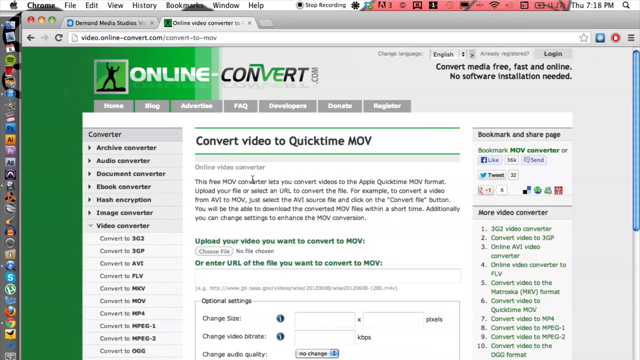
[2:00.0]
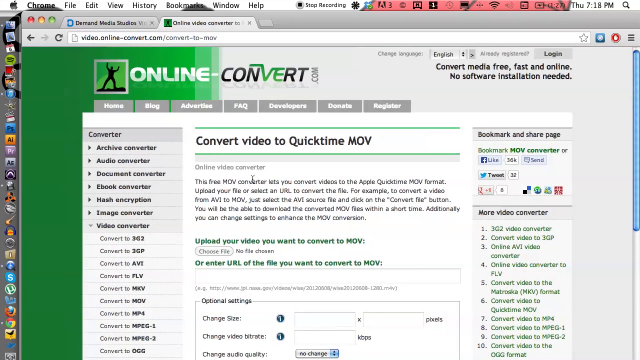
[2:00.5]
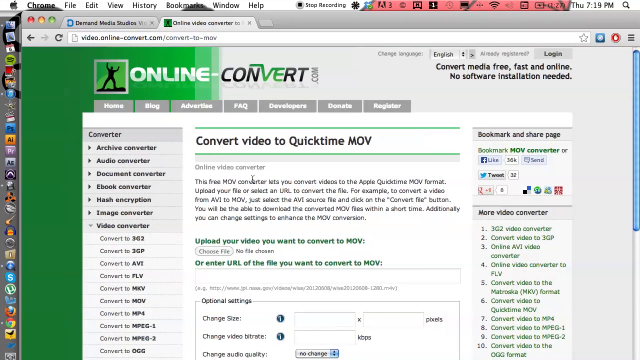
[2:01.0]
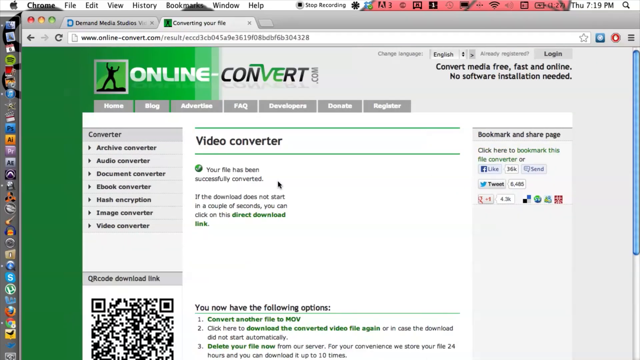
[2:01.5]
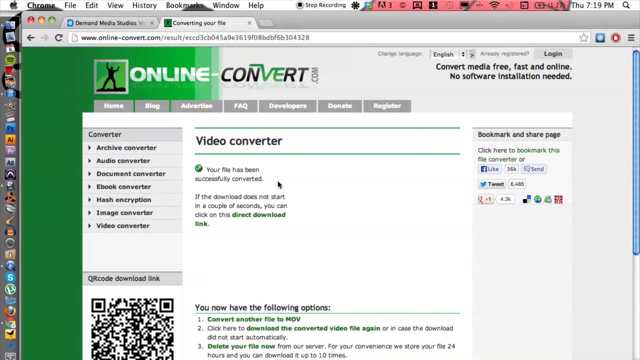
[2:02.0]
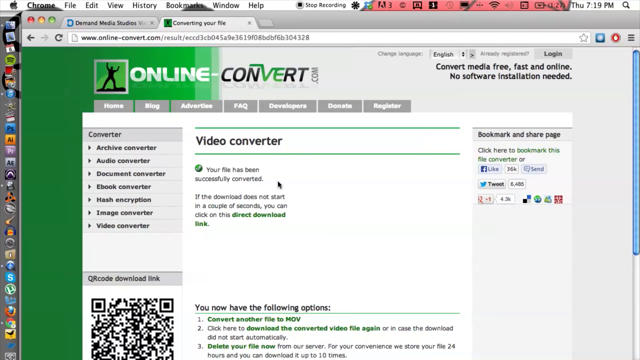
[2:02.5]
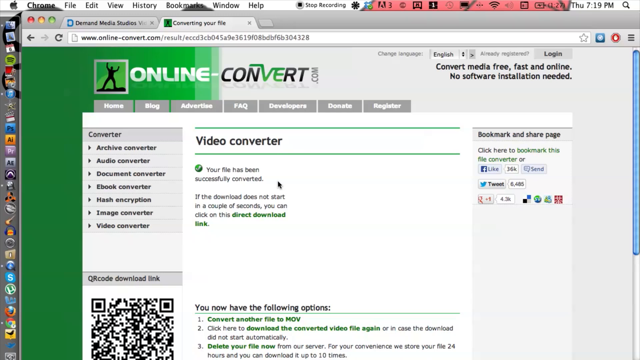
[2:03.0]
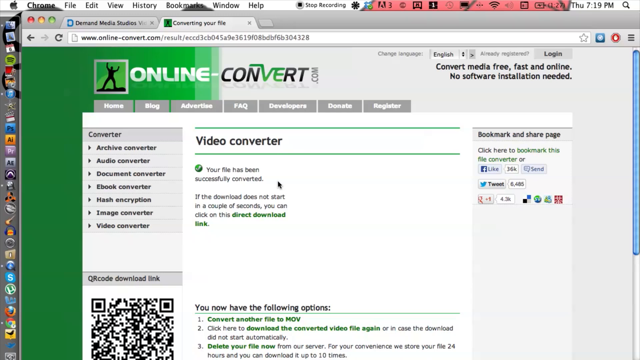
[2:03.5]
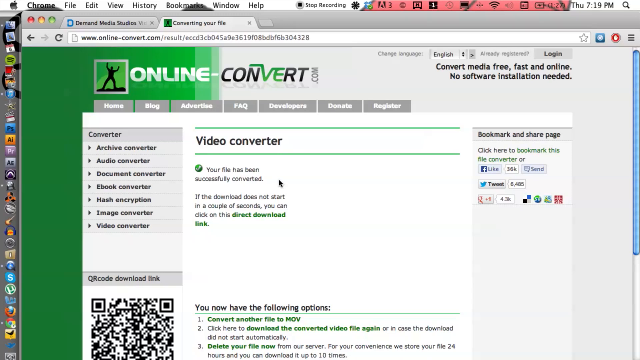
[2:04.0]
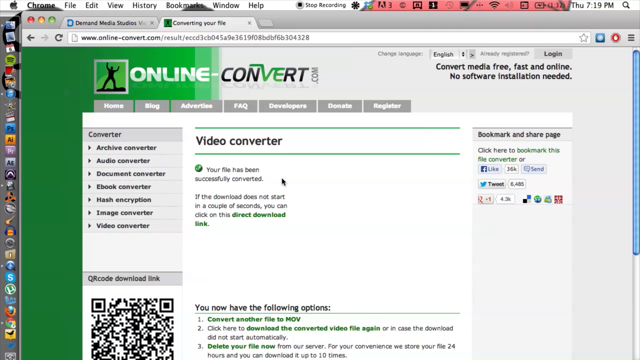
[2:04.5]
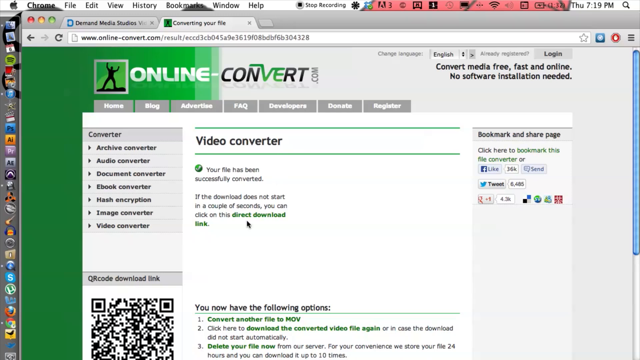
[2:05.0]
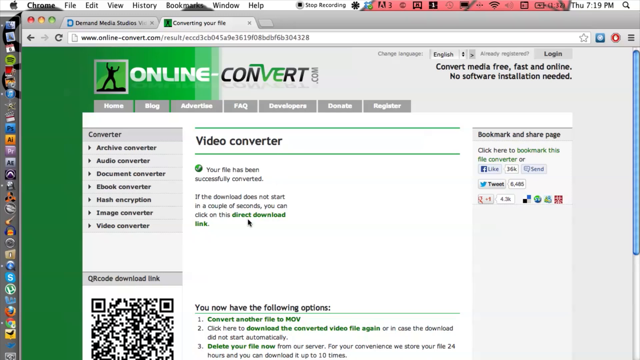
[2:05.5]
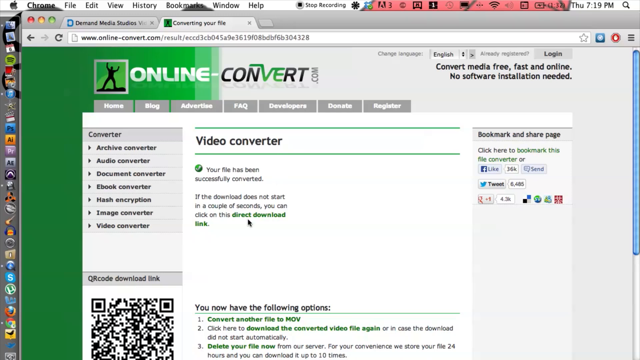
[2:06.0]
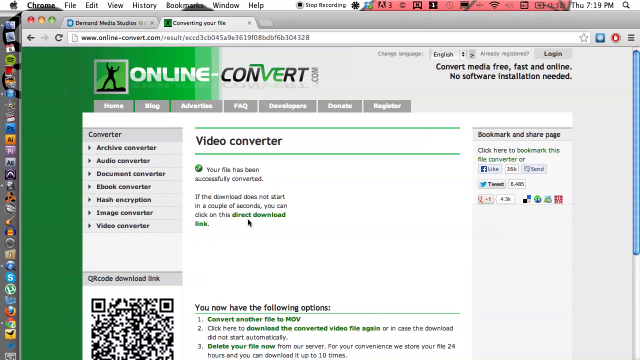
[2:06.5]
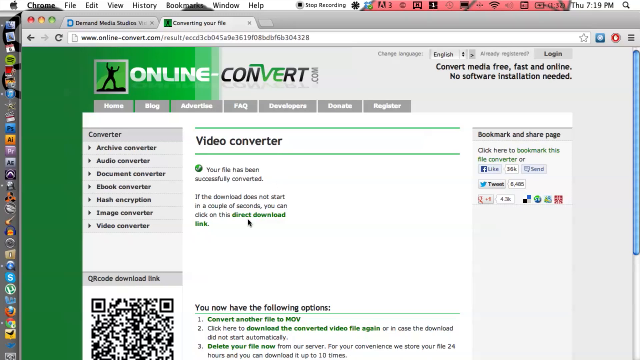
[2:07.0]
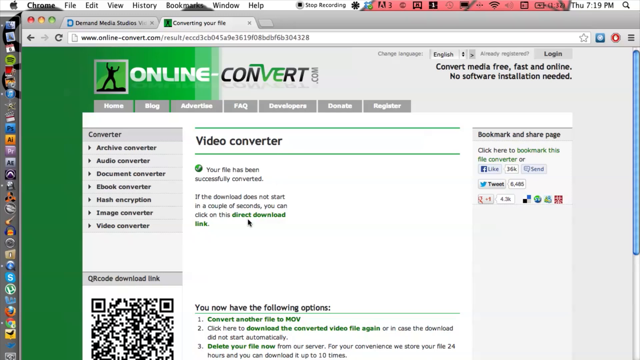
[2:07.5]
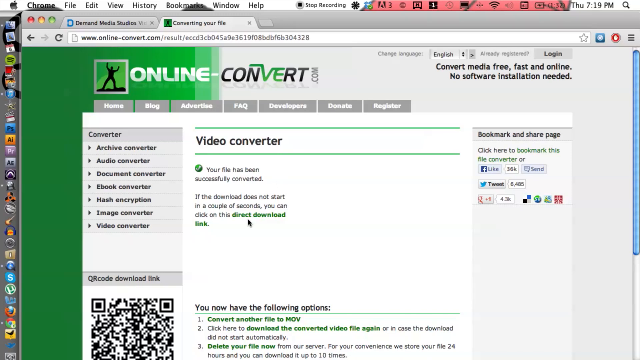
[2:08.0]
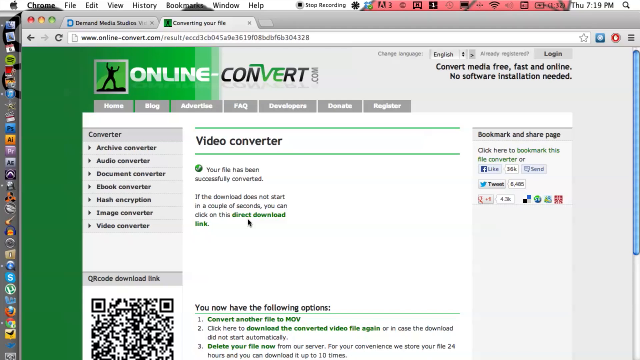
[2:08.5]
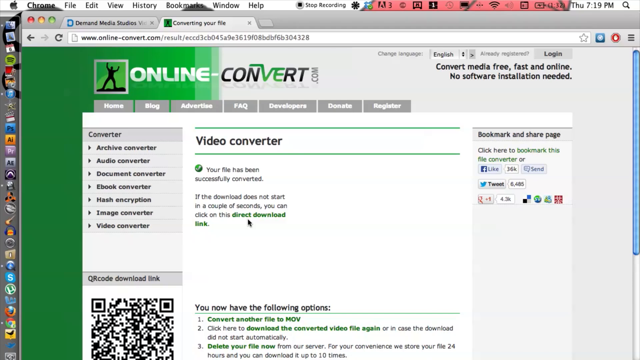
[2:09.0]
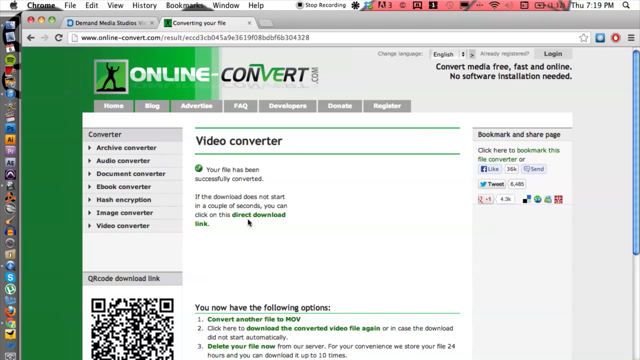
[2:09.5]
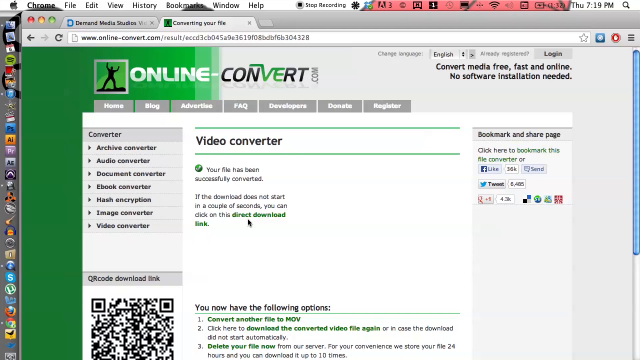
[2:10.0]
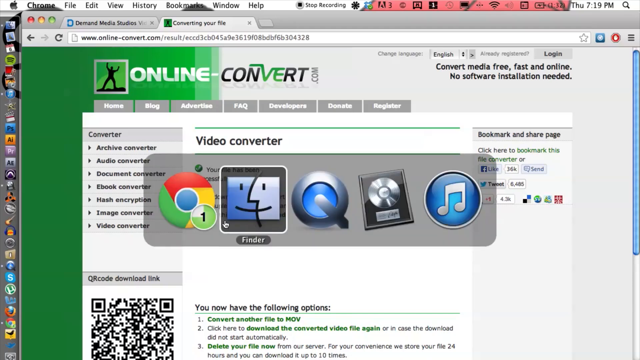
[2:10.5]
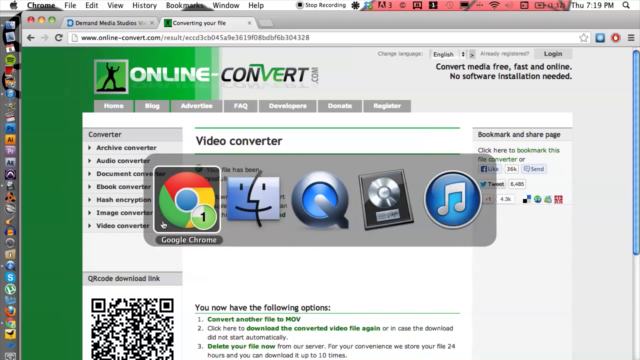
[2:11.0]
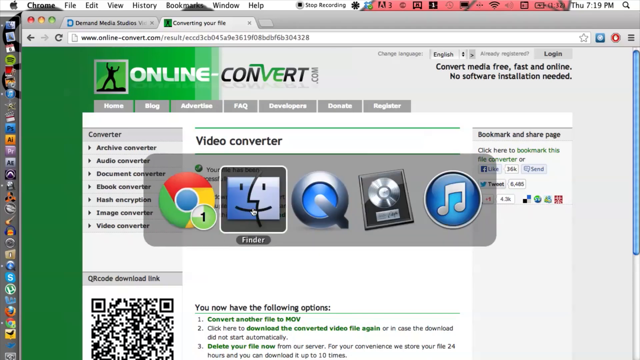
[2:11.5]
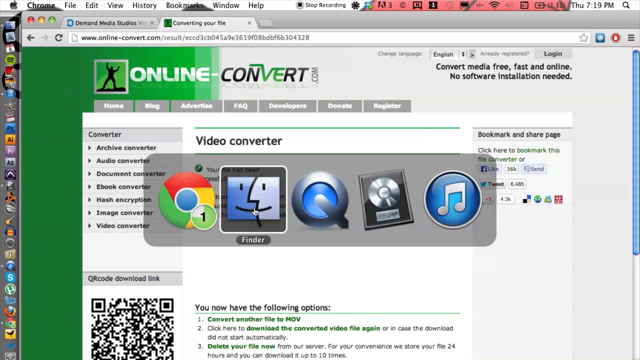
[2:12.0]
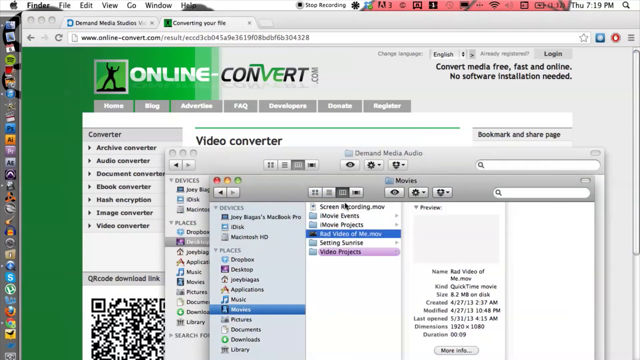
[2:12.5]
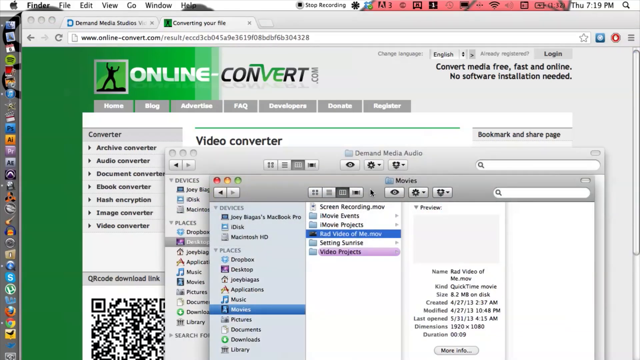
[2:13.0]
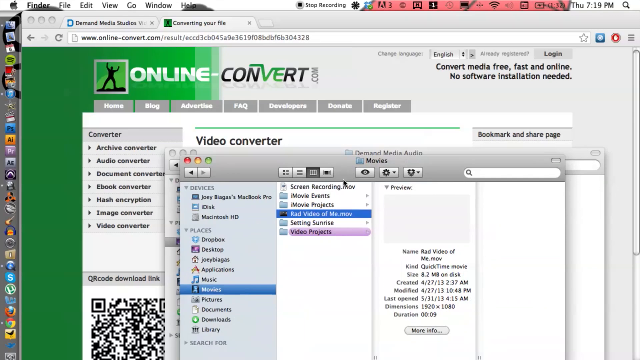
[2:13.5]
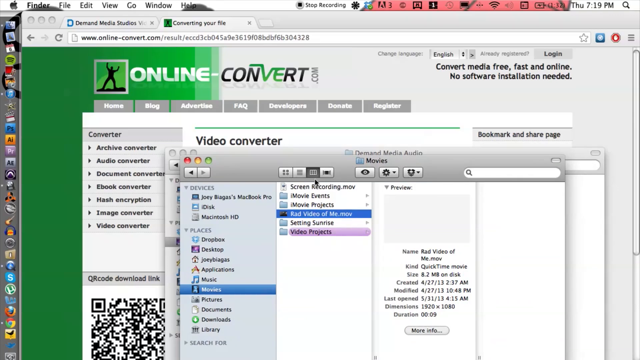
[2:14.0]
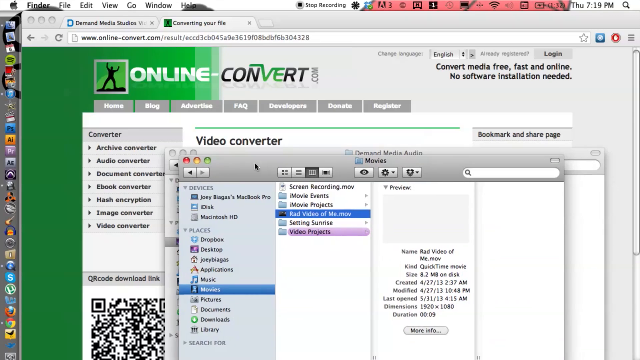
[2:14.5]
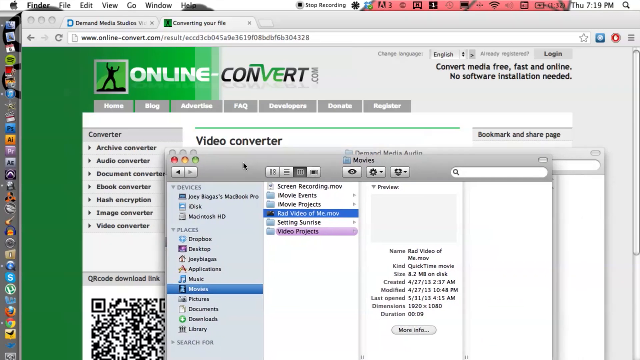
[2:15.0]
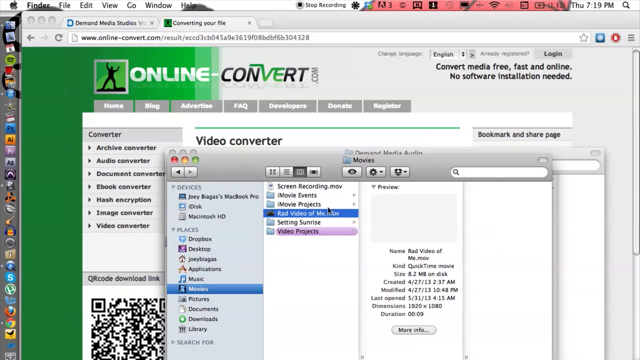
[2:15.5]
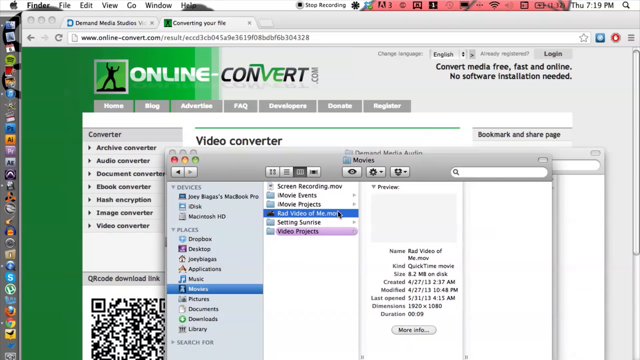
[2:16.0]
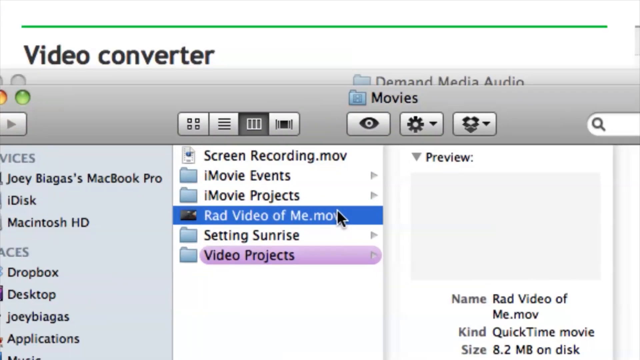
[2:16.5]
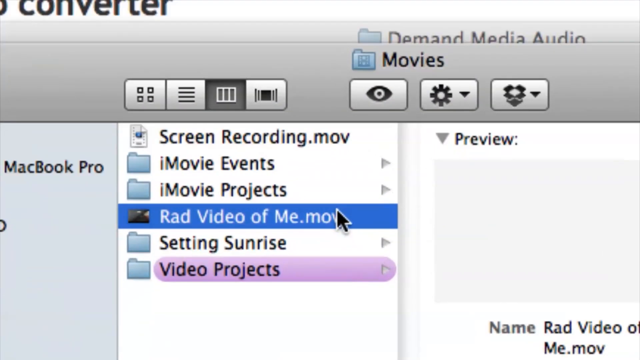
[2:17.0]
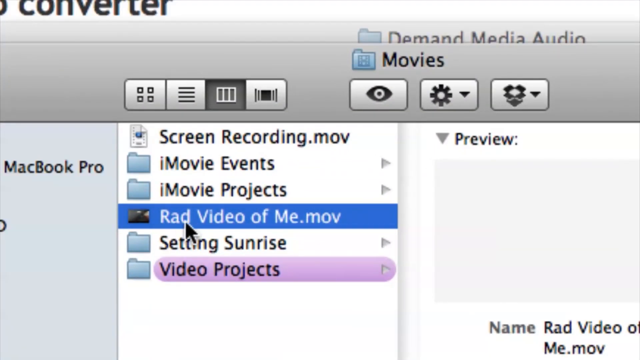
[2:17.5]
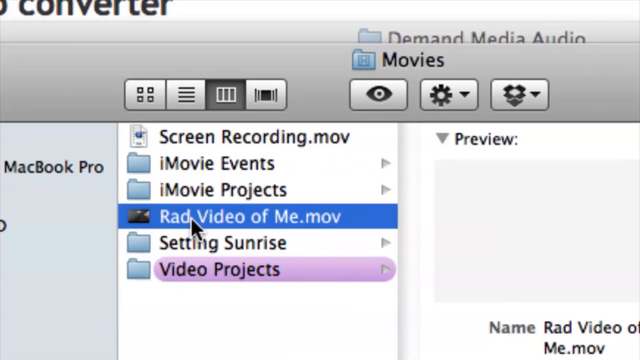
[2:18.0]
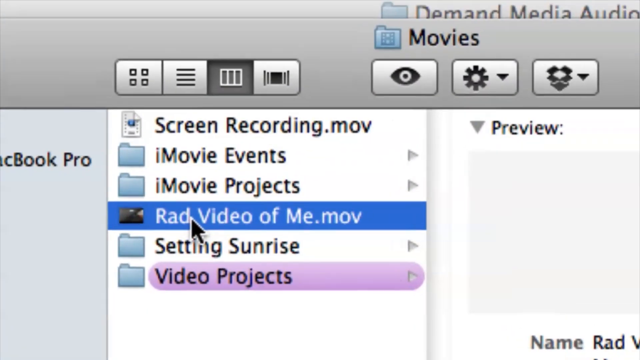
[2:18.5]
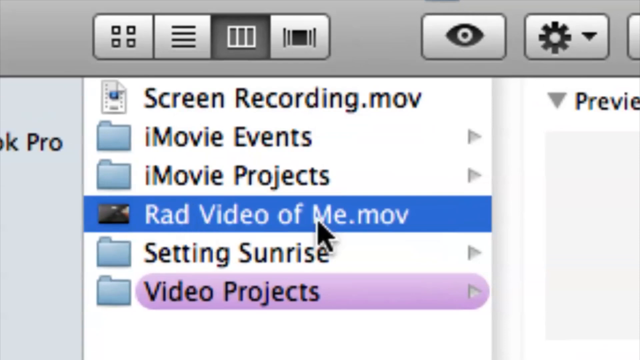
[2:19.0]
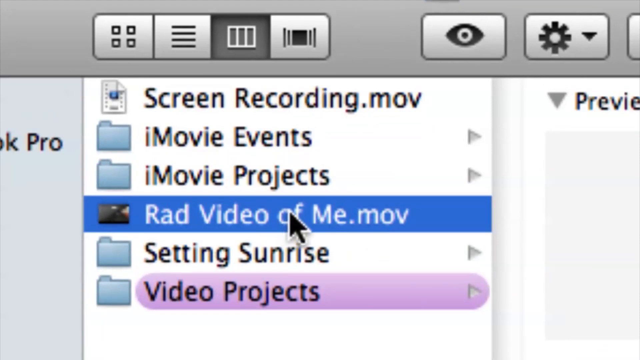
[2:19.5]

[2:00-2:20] He uses the onlineconvert.com video converter, working with different sections such as Finder and Google to convert files. The website's layout is green and white, with red and green on the left-hand side and white on the right-hand side.